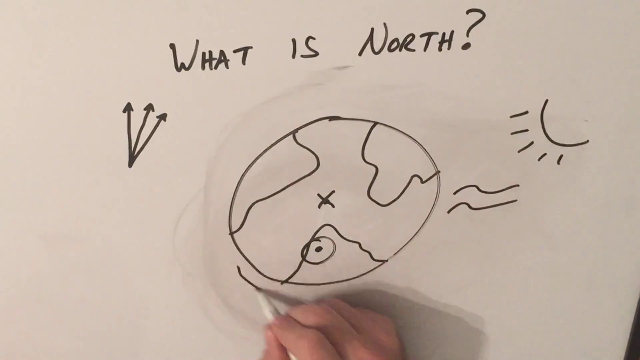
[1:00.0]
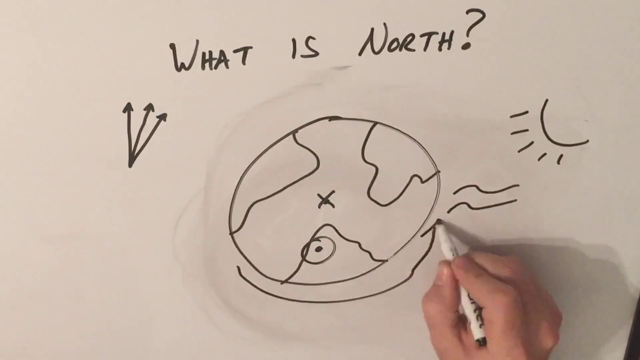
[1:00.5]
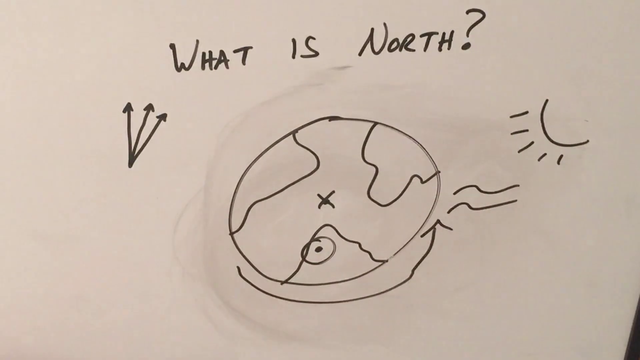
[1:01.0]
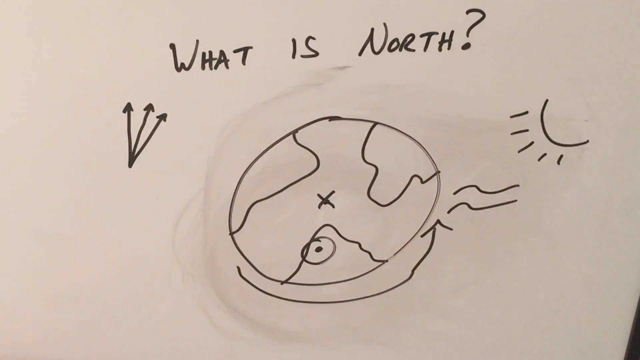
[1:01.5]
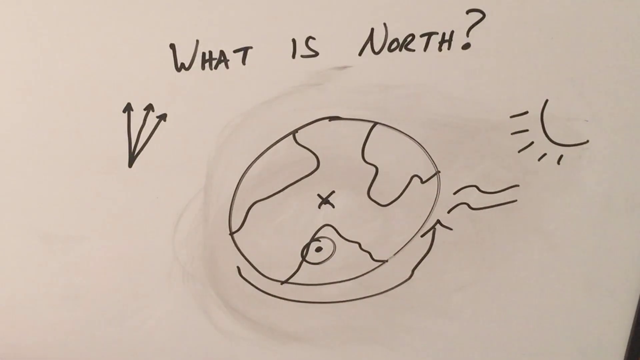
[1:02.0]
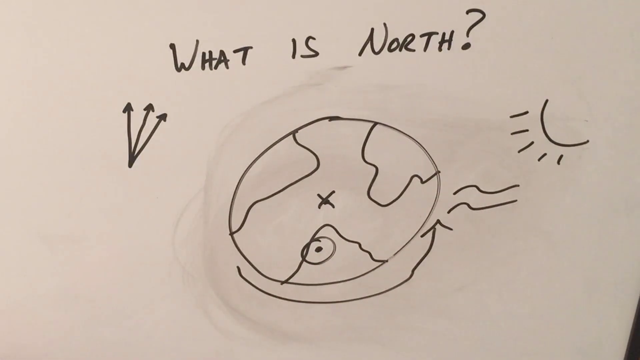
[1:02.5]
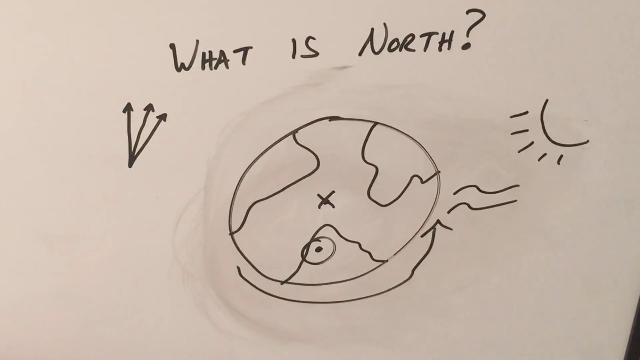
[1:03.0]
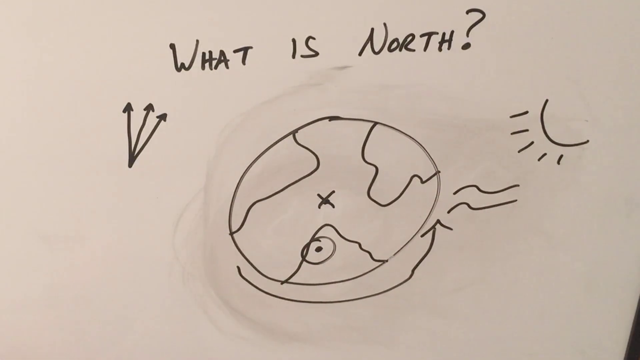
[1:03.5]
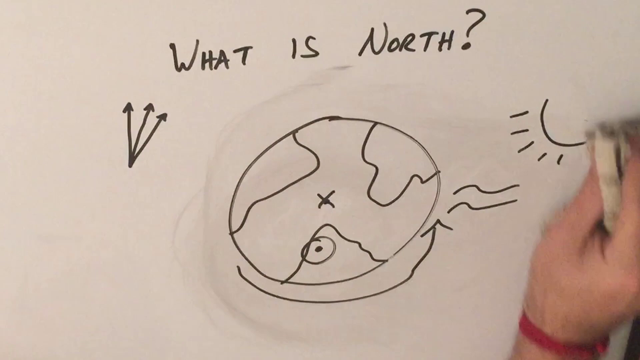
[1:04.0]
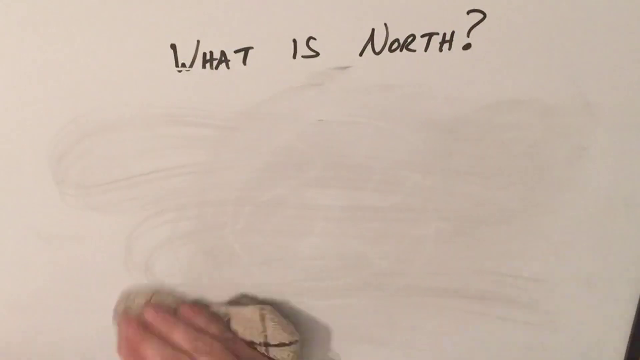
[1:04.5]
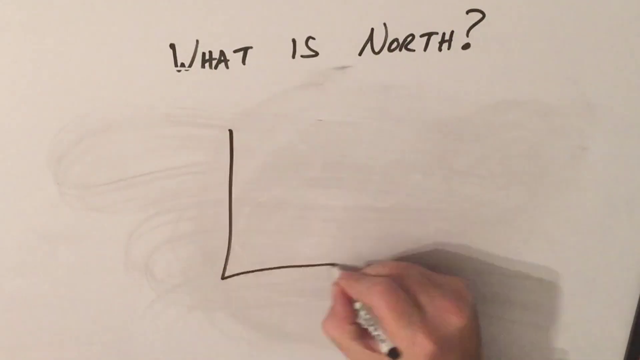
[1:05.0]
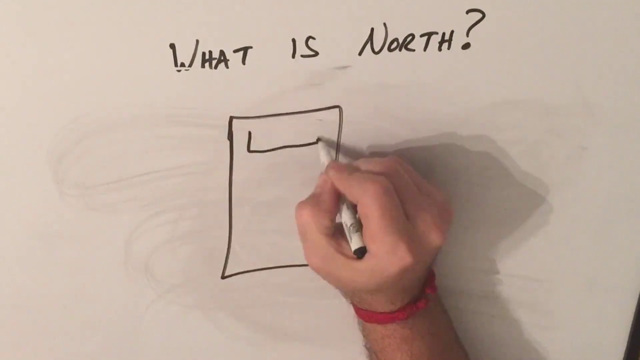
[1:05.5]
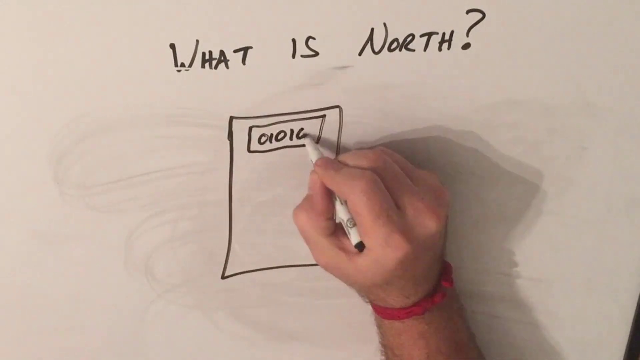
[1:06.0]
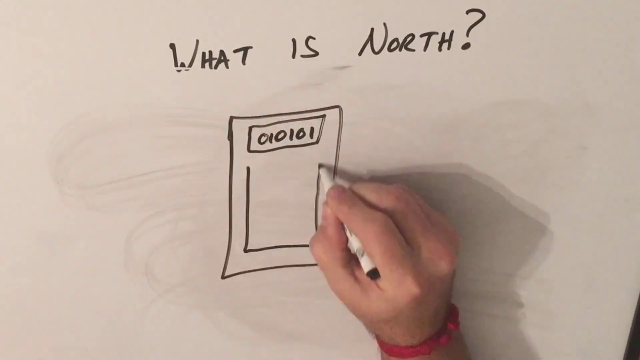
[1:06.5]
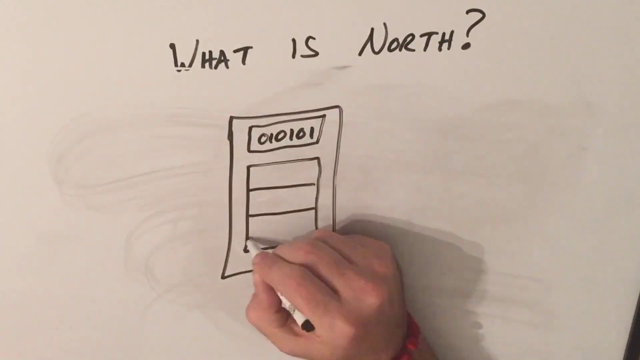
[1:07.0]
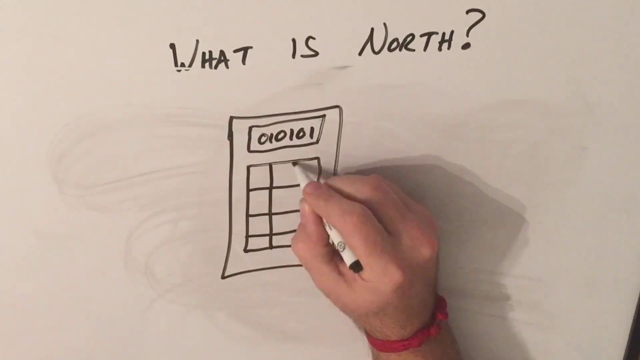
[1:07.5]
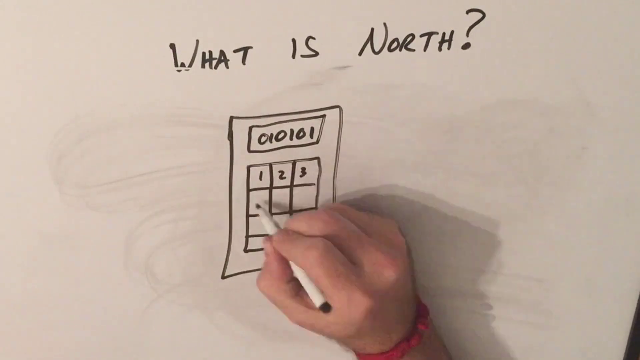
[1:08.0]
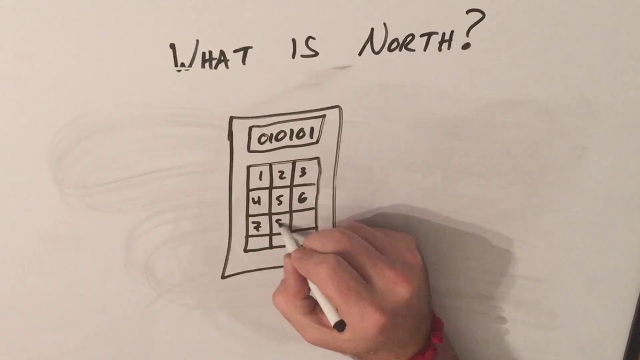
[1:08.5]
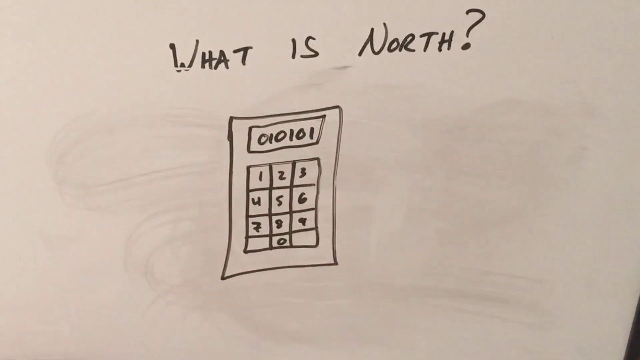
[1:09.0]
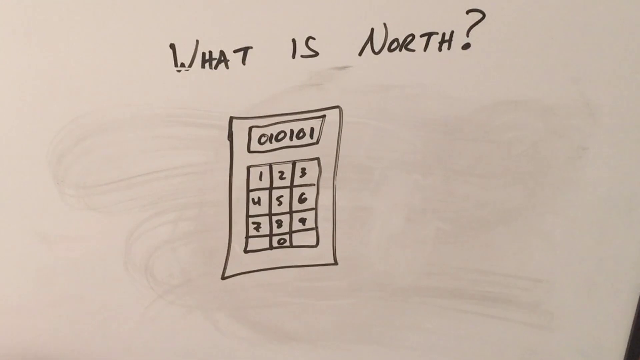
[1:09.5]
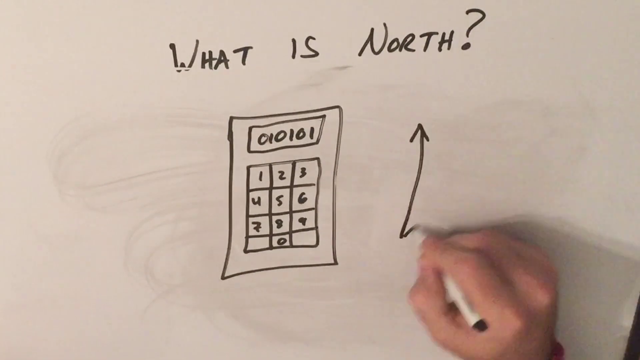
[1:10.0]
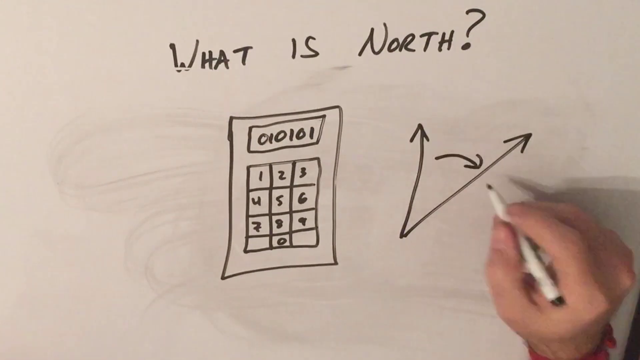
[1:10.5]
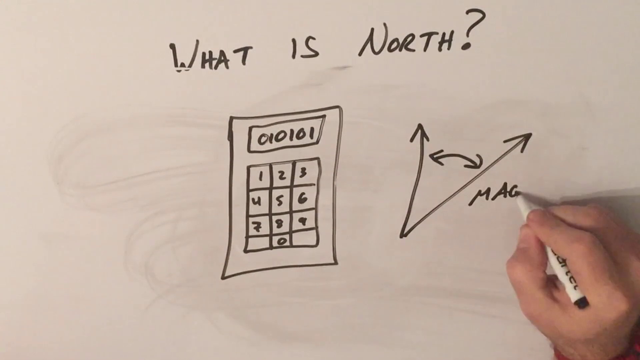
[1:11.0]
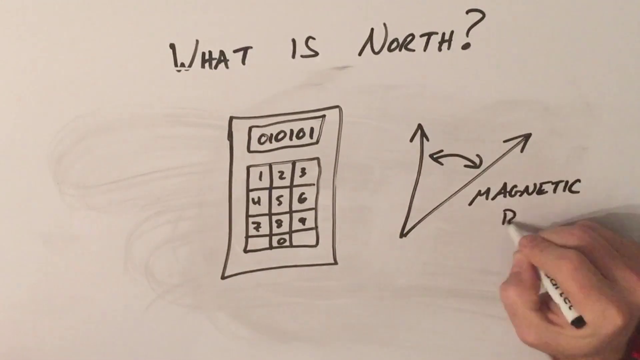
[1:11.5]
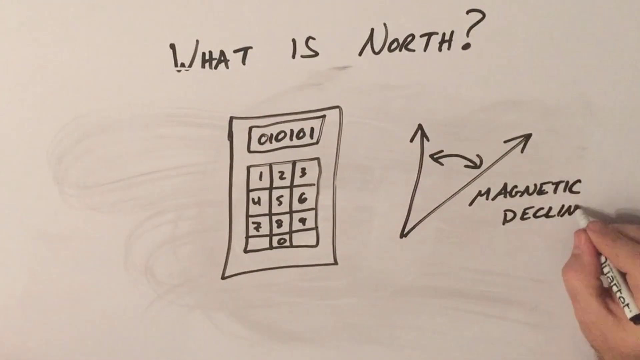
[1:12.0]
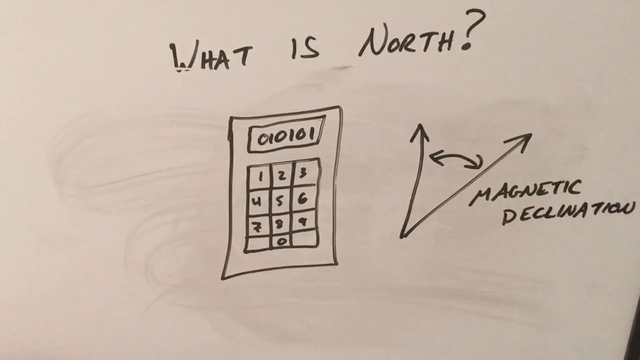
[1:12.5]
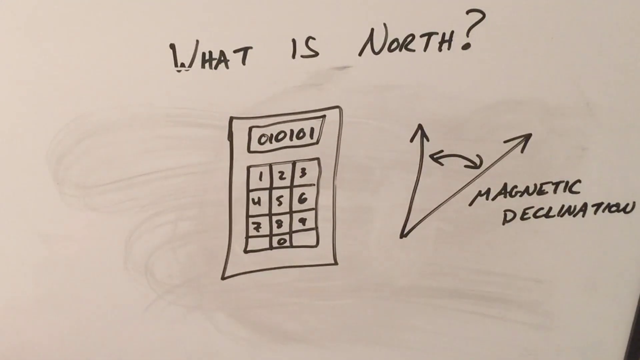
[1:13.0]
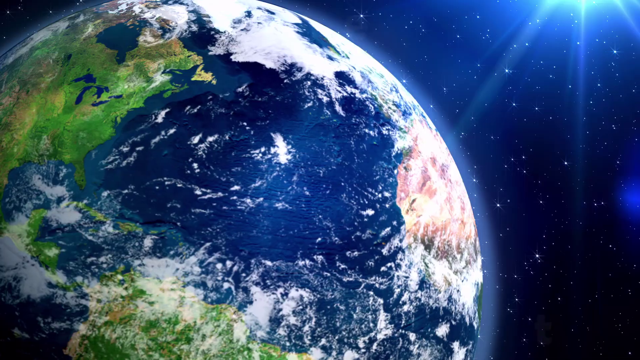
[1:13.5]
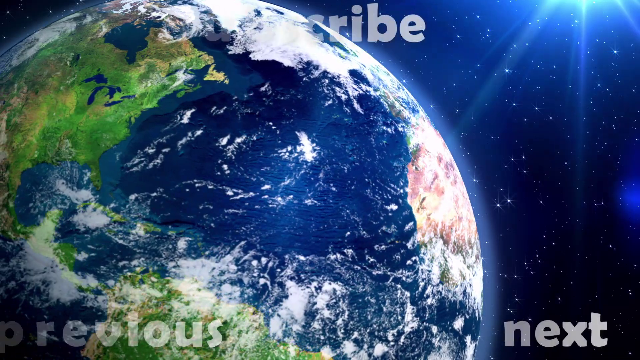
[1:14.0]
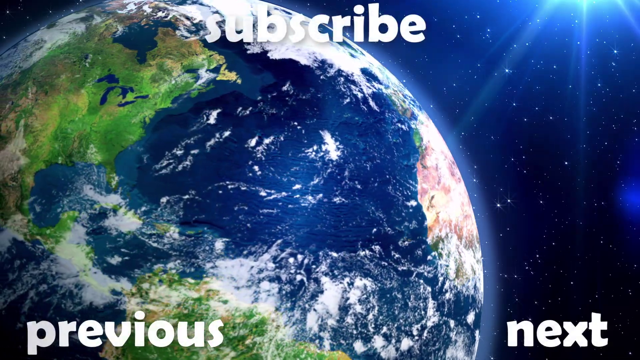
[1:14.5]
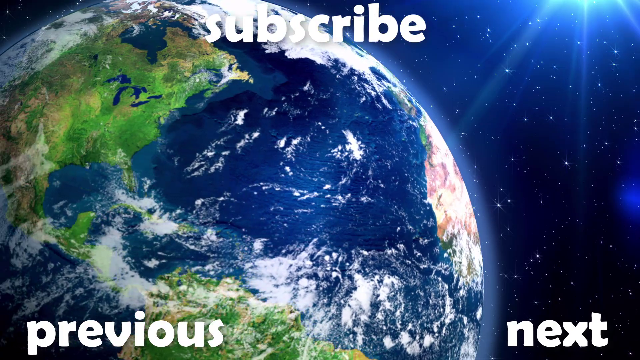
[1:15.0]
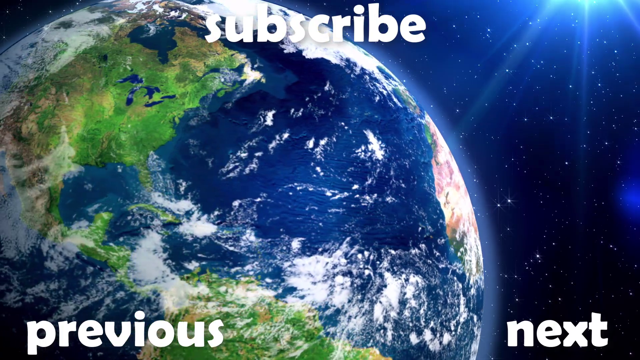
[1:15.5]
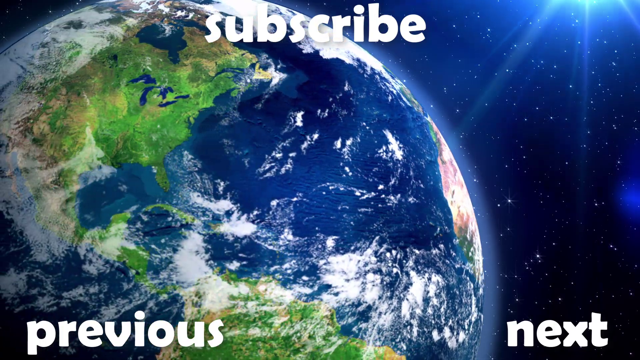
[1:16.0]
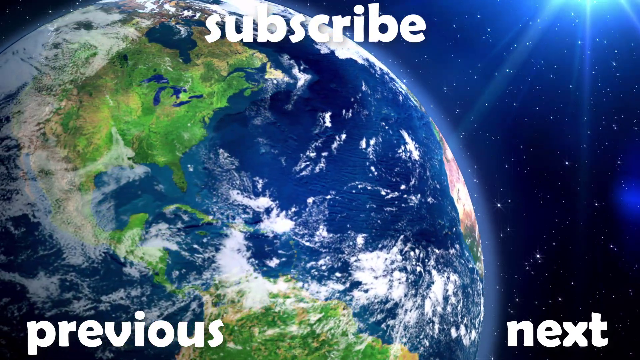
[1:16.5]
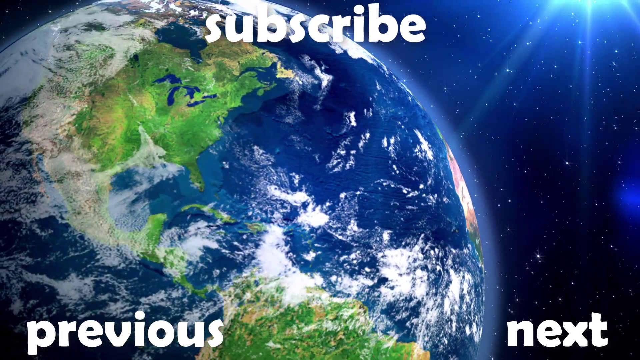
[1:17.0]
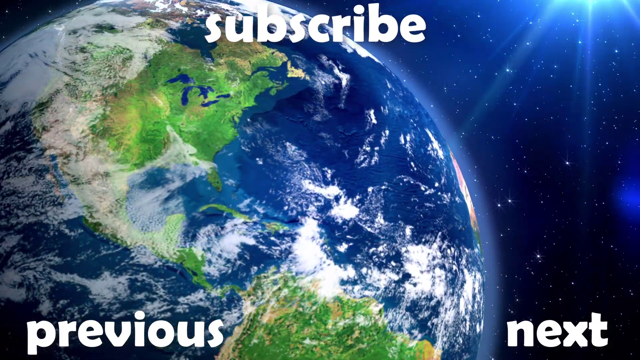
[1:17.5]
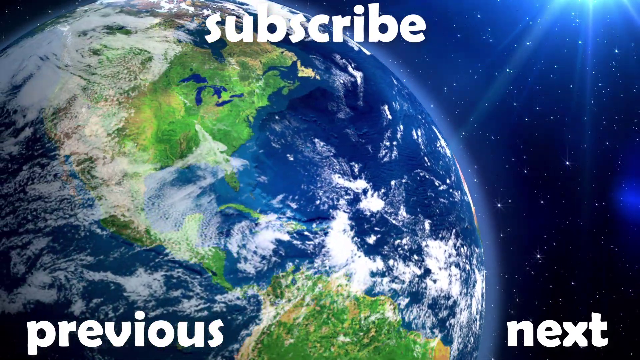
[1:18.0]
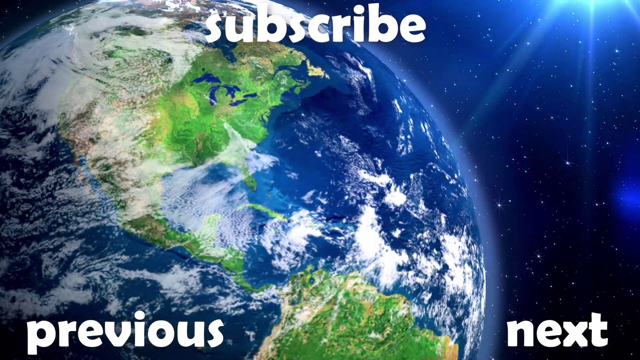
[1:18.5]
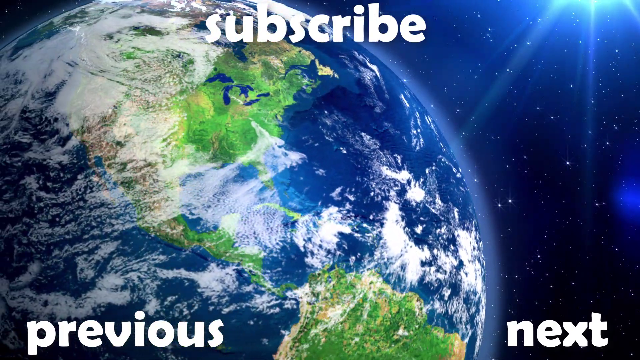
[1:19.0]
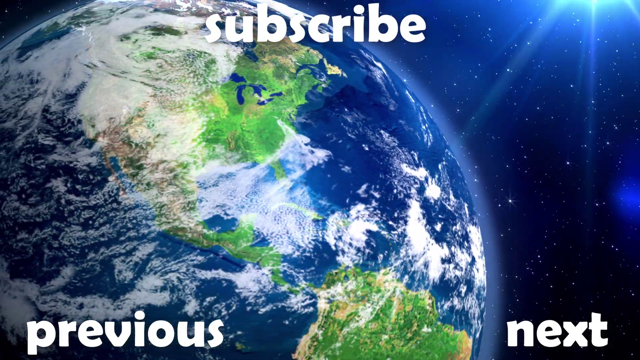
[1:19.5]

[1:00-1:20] A whiteboard shows "what is North" written in capital letters in black marker at the top. Three arrows pointing up are on the left side of the whiteboard. There is a circle that looks like planet Earth with some continents drawn on it, a dot in the middle with an X through it, and a dot with a circle around it on one of the continents toward the bottom of the video. There is also what looks like a sun with rays coming out of it. Wavy lines sit to the right of the planet, and an arrow goes from the left side of the planet to the right side. The hand then erases all of the drawings on the board and draws a rectangle with another rectangle inside it, then makes a sort of number pad, which looks like a drawing of a calculator with a readout screen. Next it draws two arrows at about a 30-degree angle and writes "magnetic declination". A color image of a spinning globe follows, with the word "subscribe" in white letters at the top of the screen.